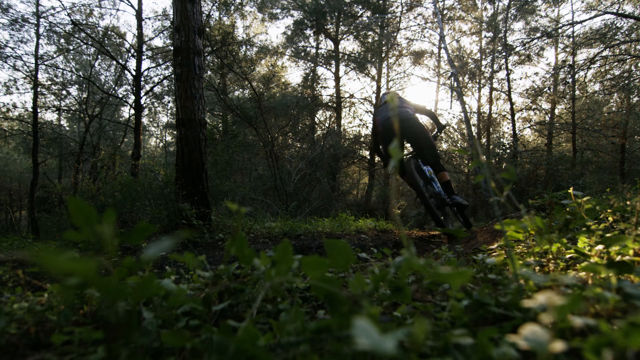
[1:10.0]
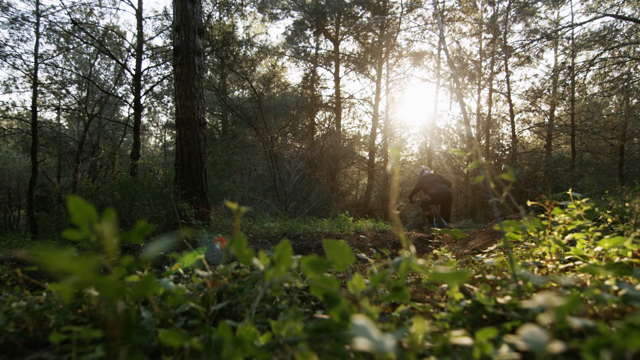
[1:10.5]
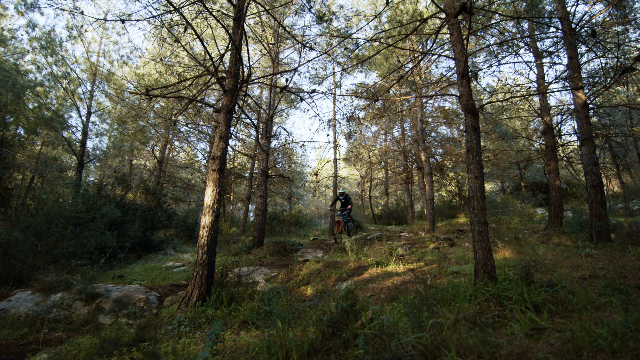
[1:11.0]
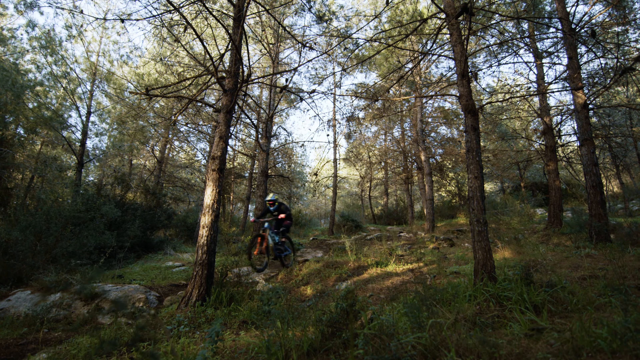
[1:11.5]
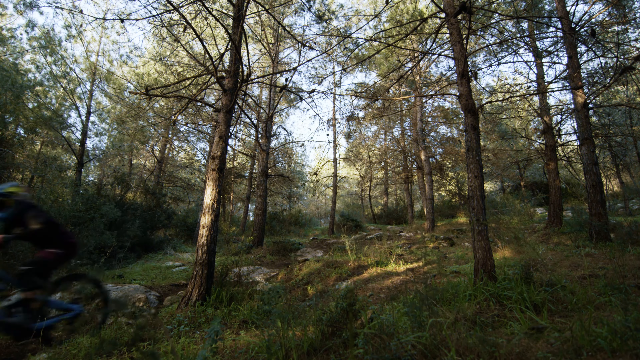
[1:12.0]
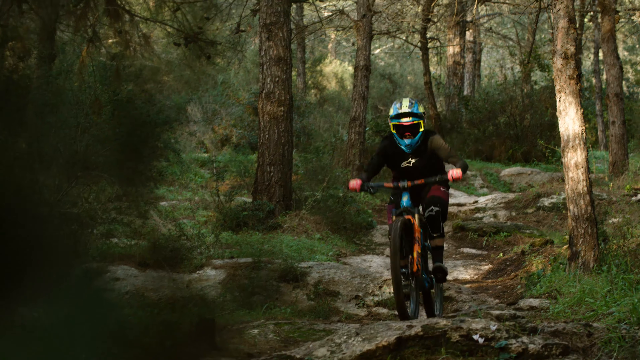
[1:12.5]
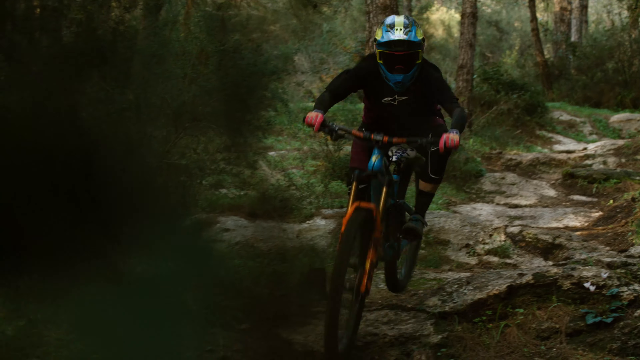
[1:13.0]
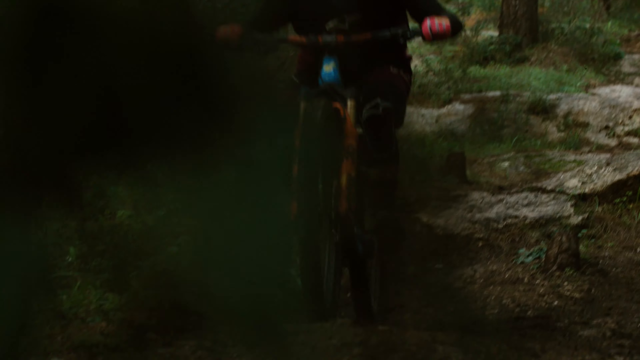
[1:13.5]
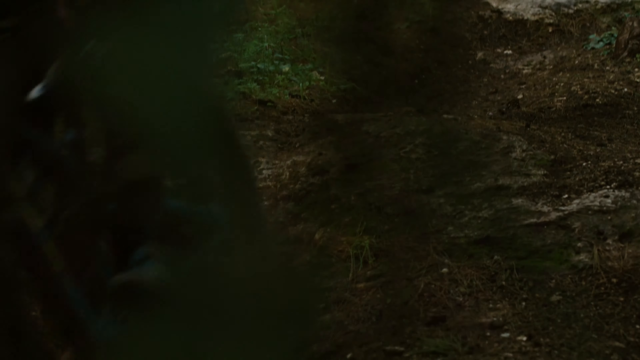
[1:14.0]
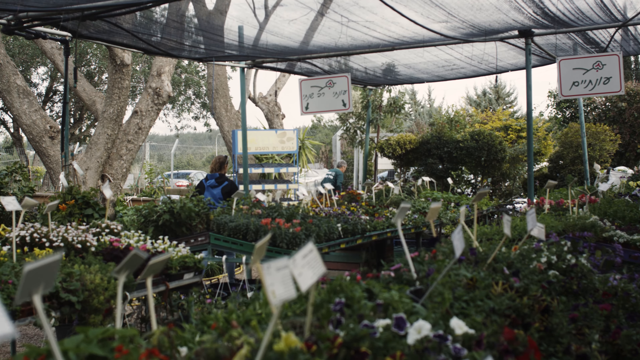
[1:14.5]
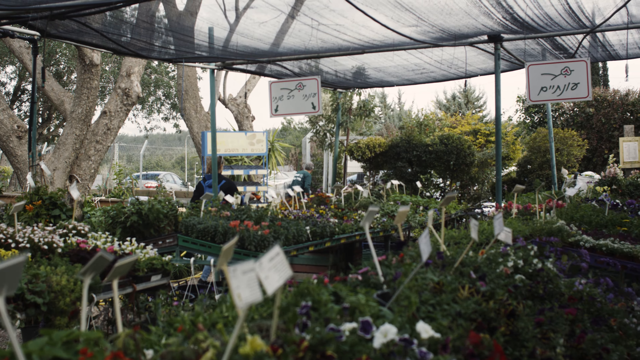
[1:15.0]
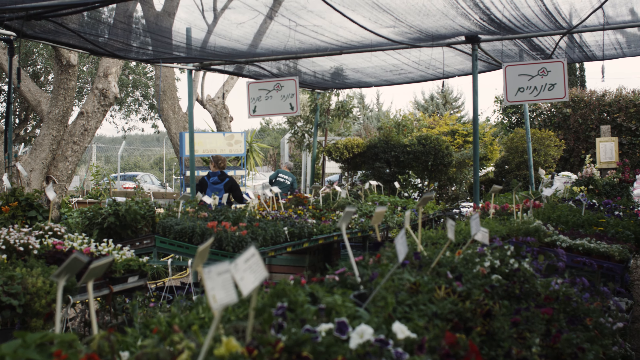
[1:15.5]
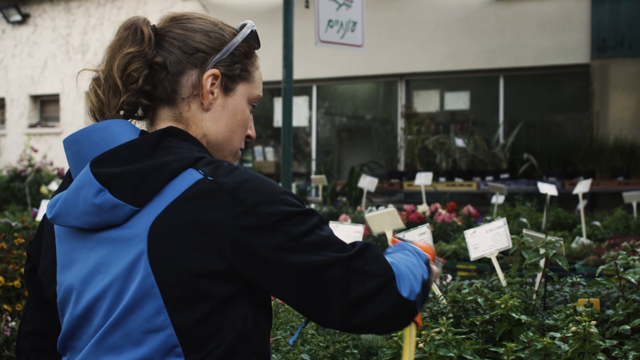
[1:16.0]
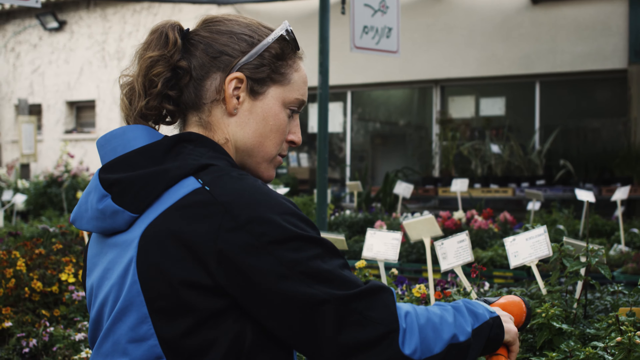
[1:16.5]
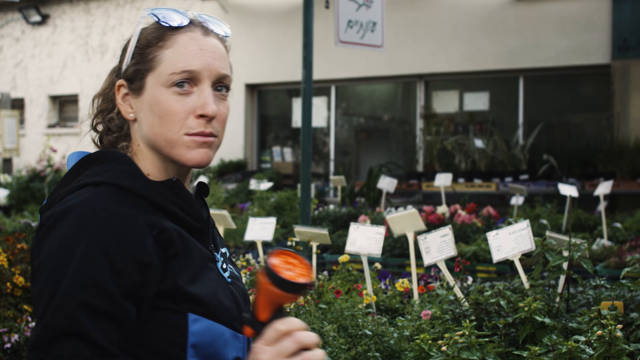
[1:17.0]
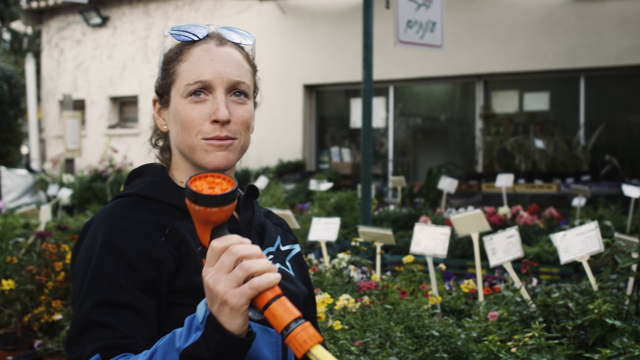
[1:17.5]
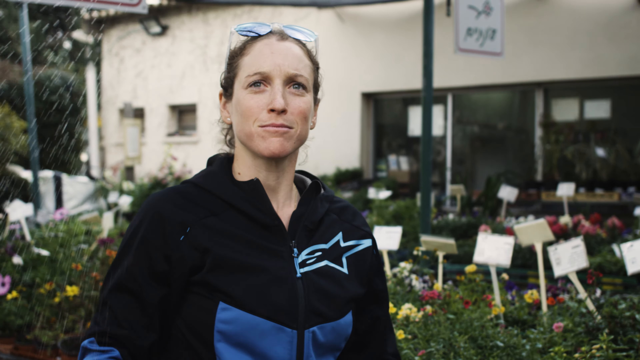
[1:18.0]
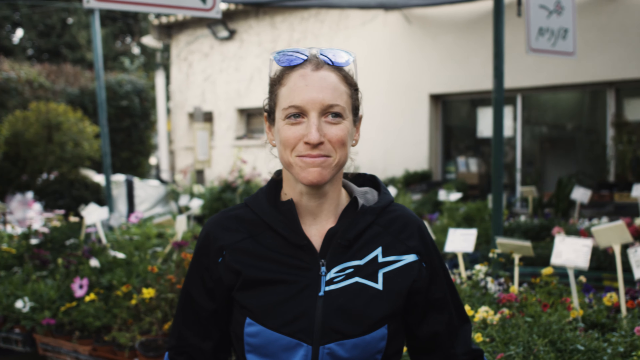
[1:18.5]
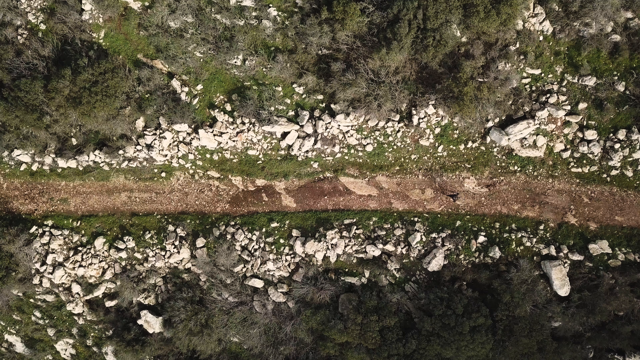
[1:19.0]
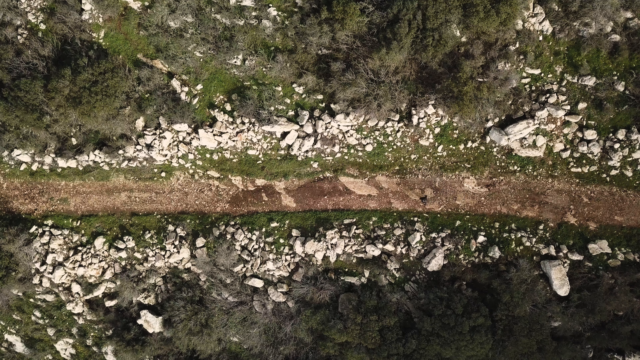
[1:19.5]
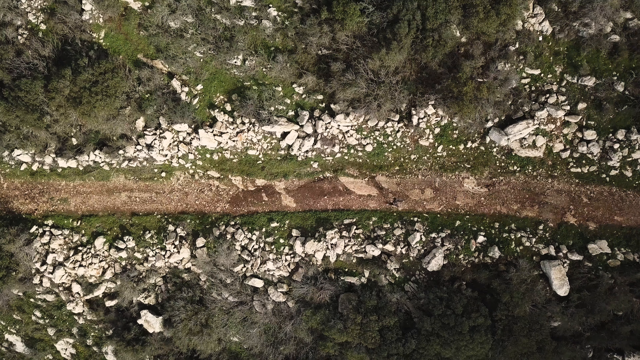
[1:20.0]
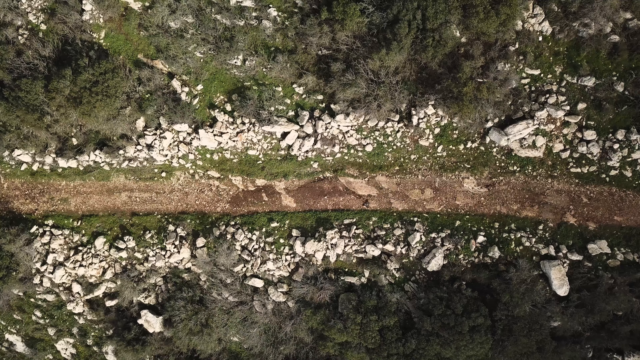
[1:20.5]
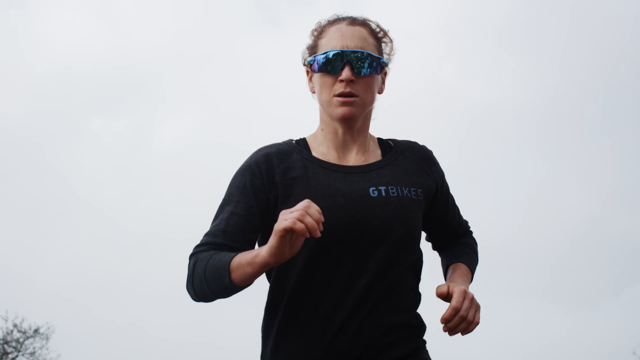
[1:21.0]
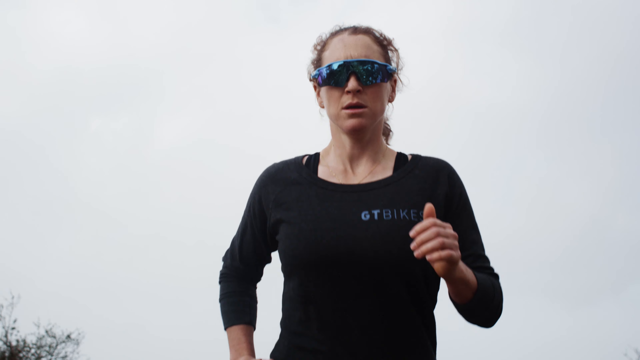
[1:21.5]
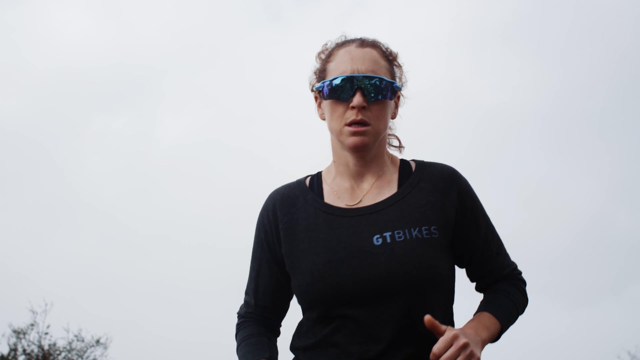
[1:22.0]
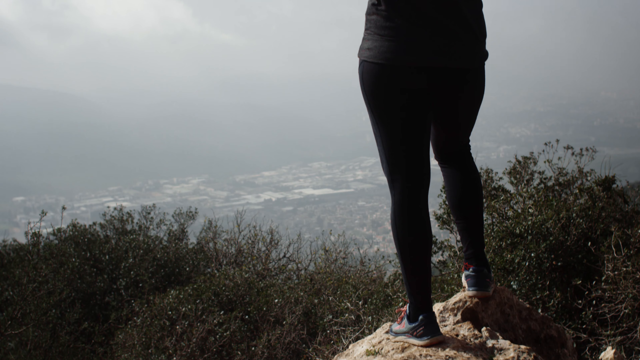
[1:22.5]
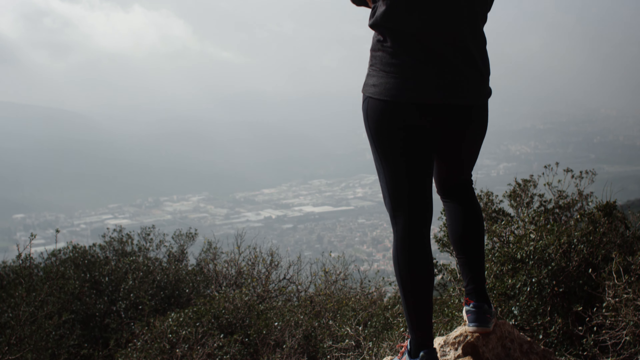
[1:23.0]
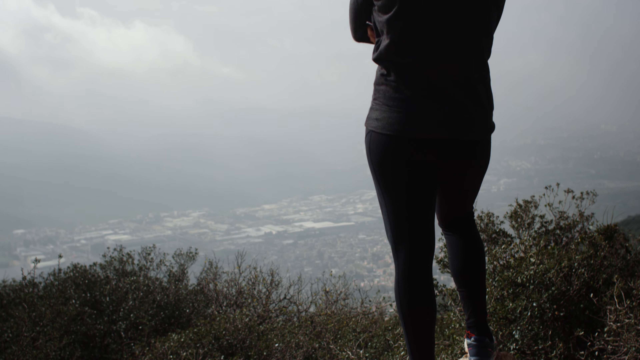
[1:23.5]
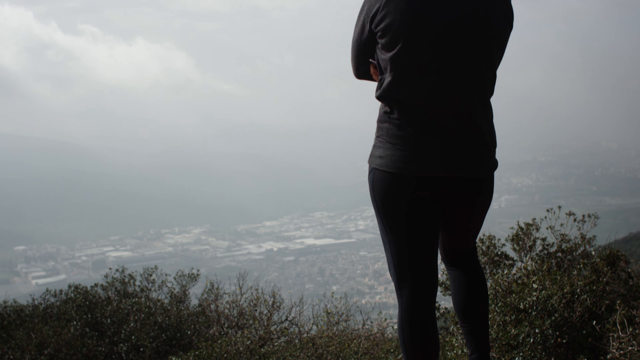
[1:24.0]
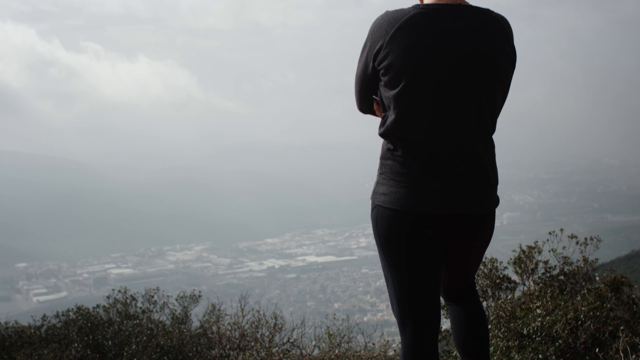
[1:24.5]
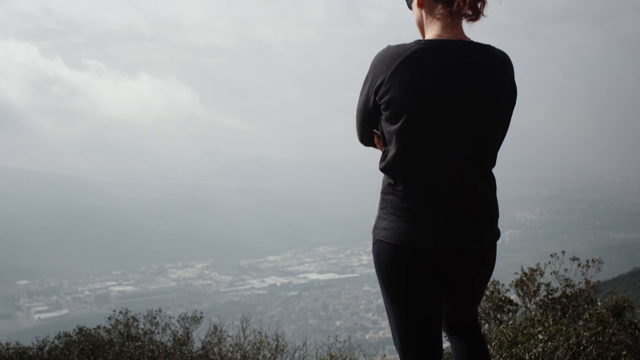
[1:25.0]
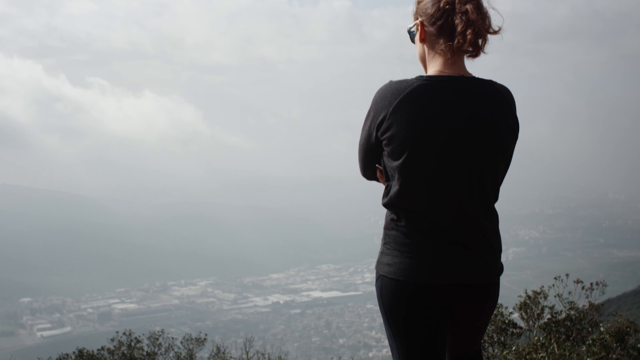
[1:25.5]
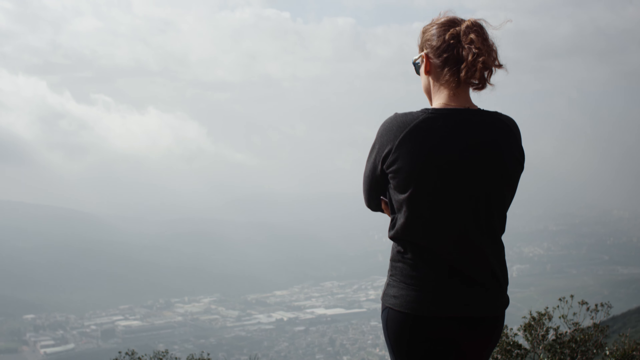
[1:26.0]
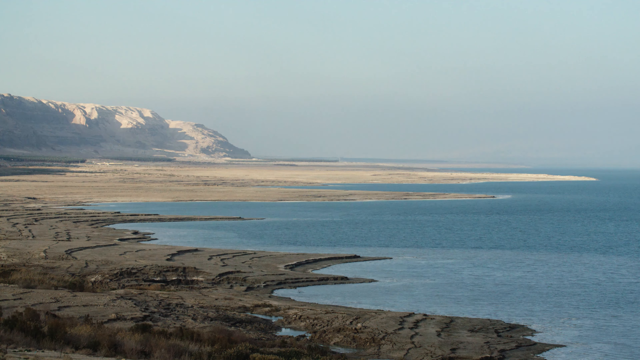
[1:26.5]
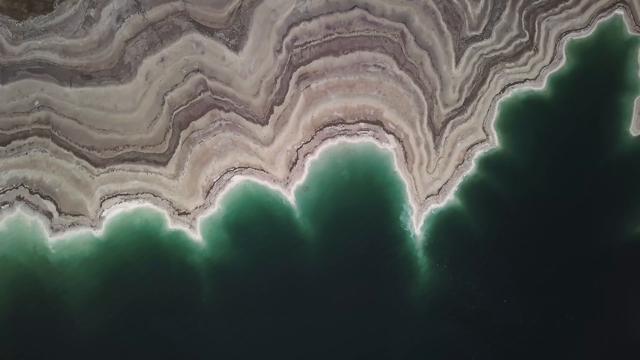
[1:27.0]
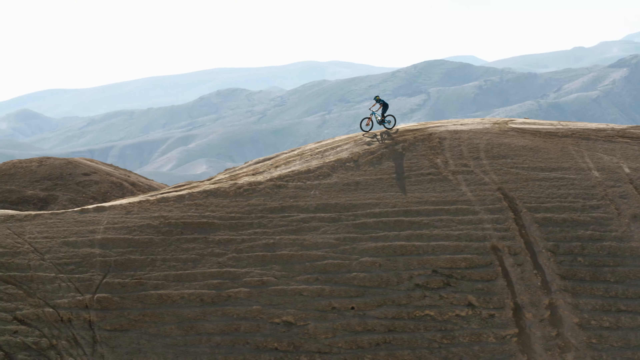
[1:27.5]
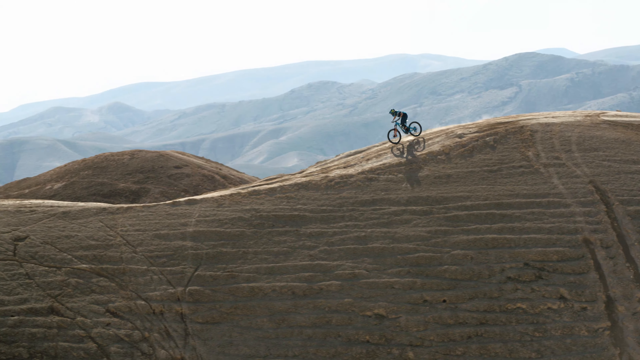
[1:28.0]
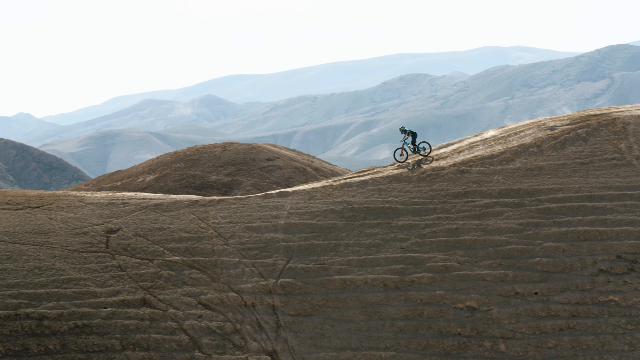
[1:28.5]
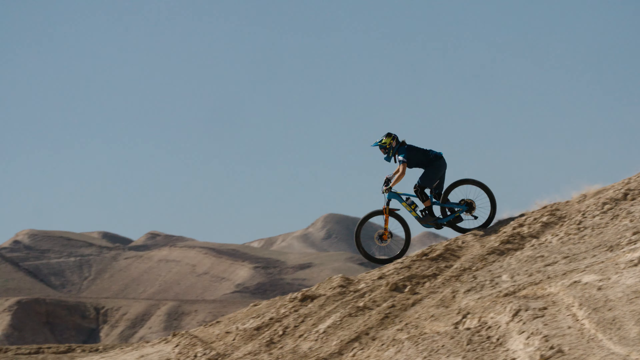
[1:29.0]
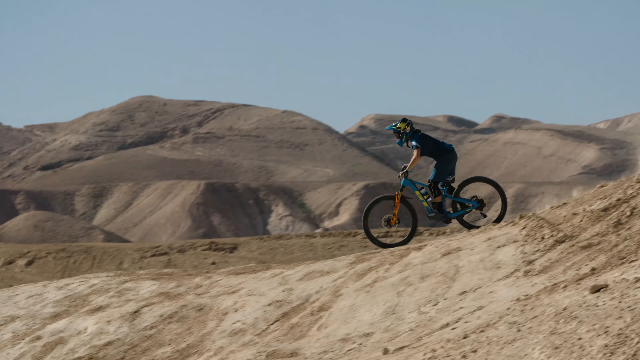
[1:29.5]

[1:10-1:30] More views show the woman rider going fairly fast through outdoor trails, wearing the blue and yellow striped helmet with a dark visor that hides her face. A short snippet shows a person walking through what looks like an outdoor flower shop with flowers in little containers; the person is seen from behind, then turns around. A close-up shows what looks like the rider, her hair tied back and her glasses pushed up on top of her head, holding an orange hose in her right hand and spraying water; apparently she also works at the garden shop. A slow-motion shot shows her jogging, seen from the waist up. Another slow-motion shot shows her standing on a hilltop looking toward the distant horizon over what looks like a town in a valley, as the camera slowly pans upward and shows her from behind. A couple of very quick outdoor views follow, one of which appears to be a lake; she is not in these. The rapid sequence includes overhead shots and close-ups.